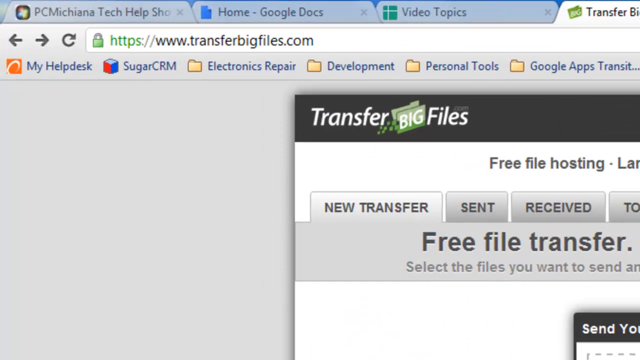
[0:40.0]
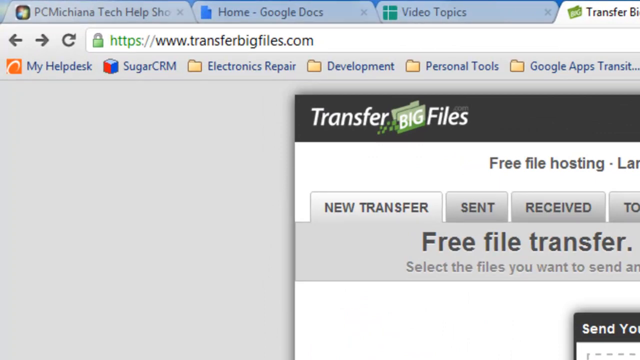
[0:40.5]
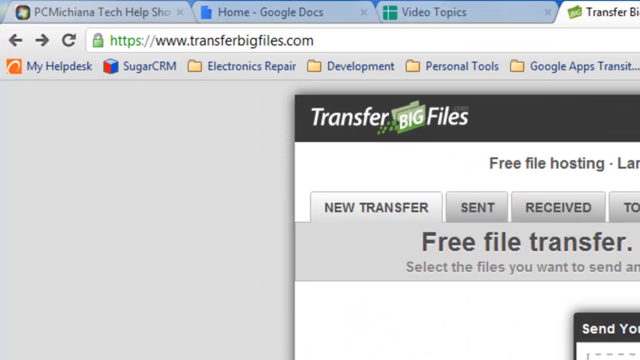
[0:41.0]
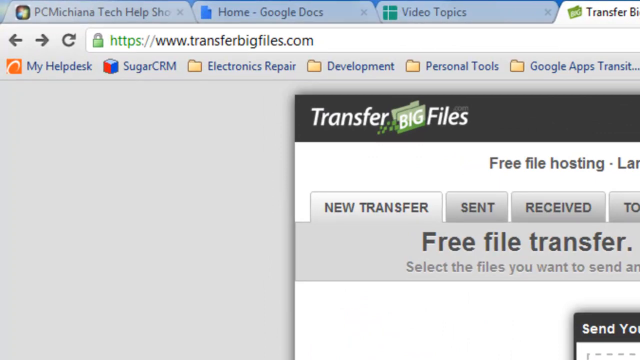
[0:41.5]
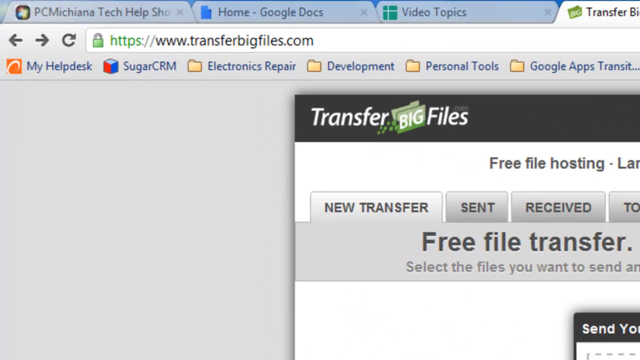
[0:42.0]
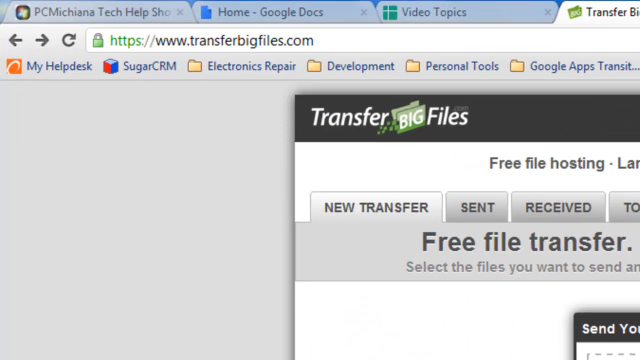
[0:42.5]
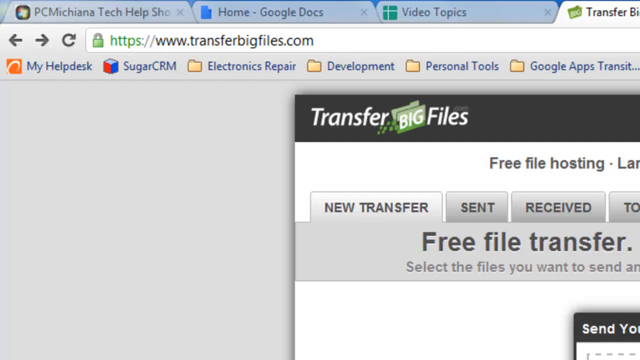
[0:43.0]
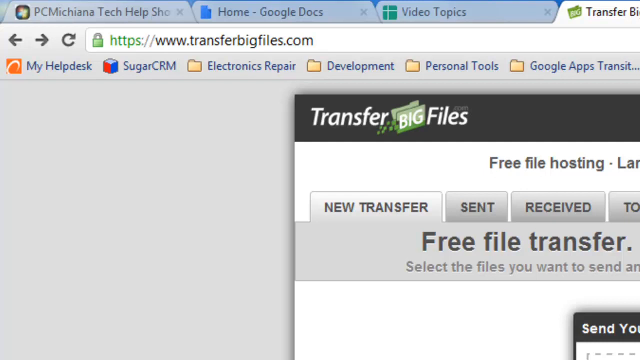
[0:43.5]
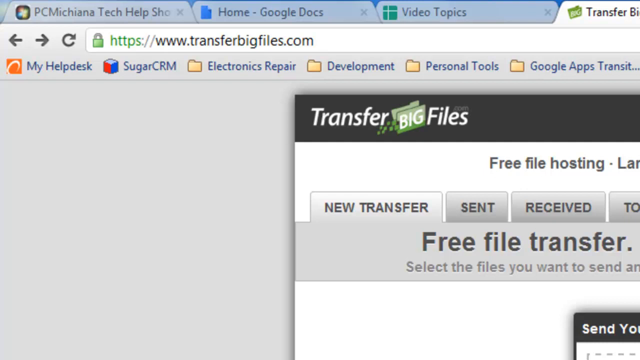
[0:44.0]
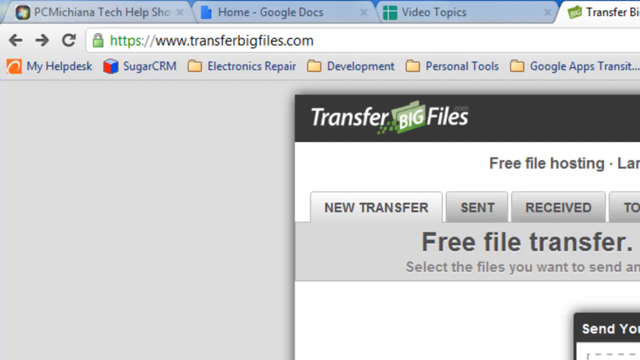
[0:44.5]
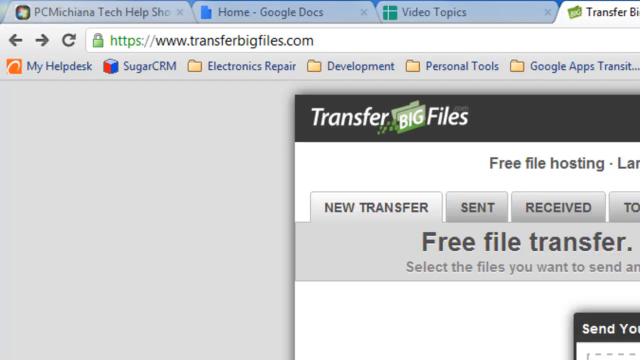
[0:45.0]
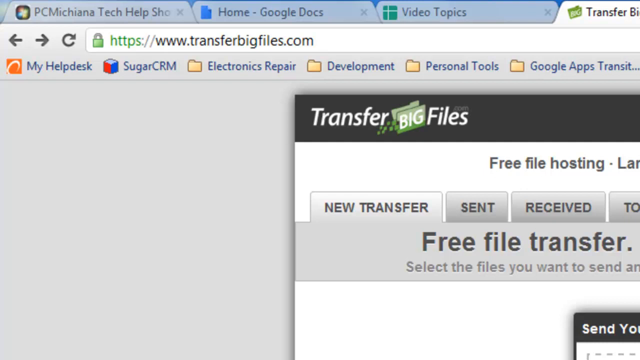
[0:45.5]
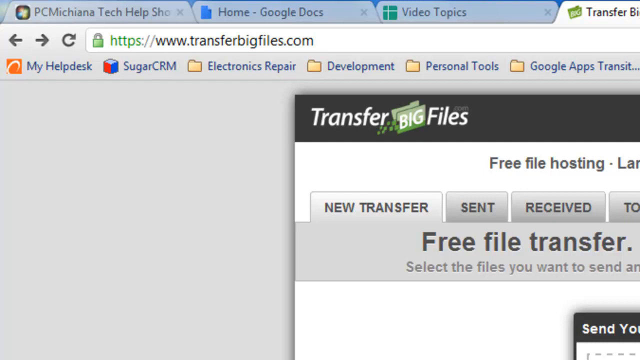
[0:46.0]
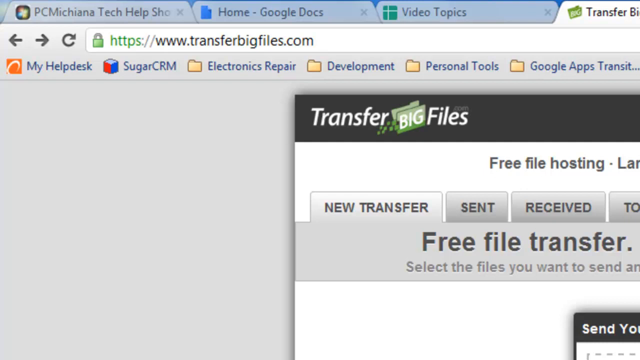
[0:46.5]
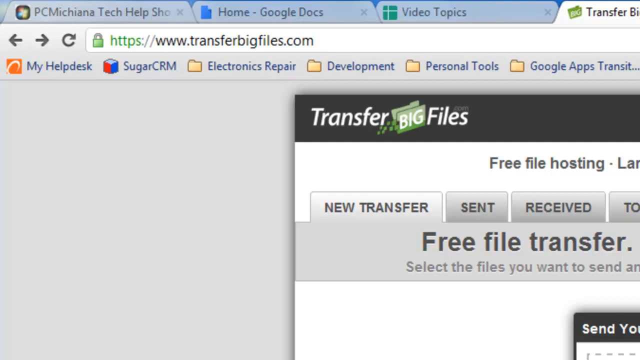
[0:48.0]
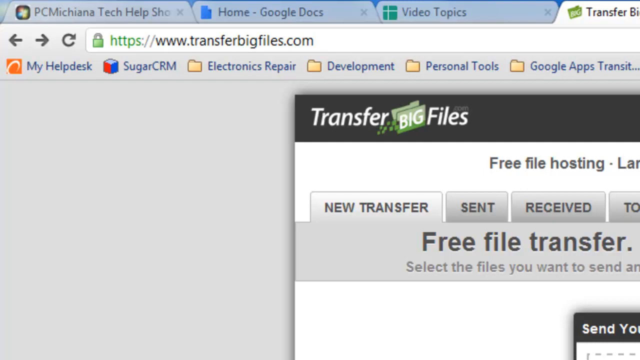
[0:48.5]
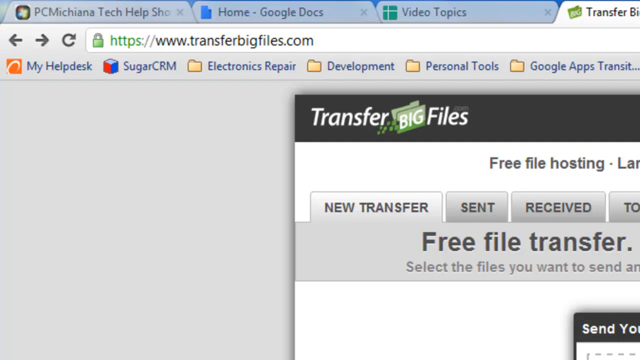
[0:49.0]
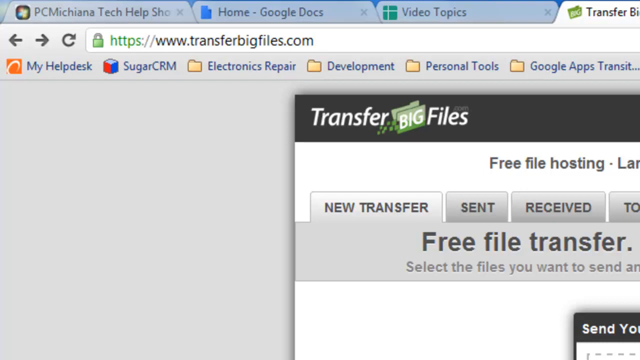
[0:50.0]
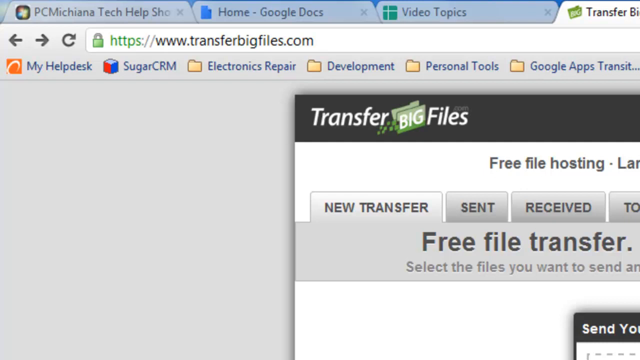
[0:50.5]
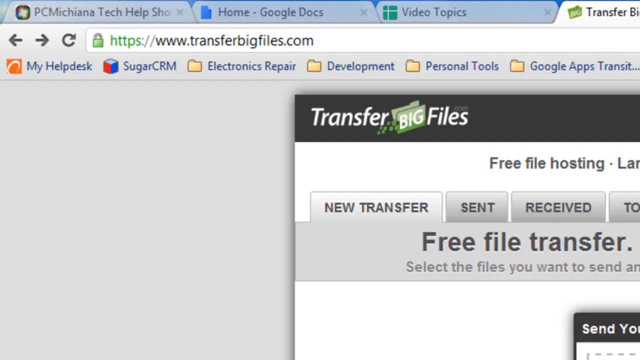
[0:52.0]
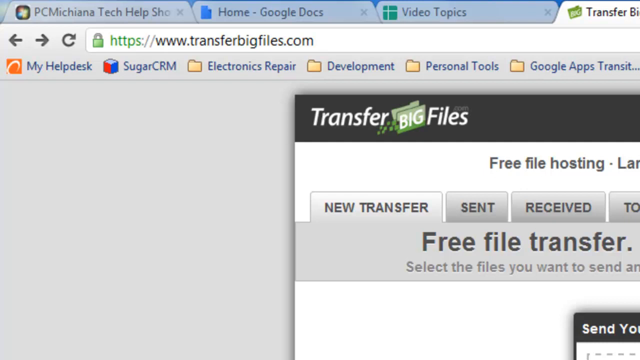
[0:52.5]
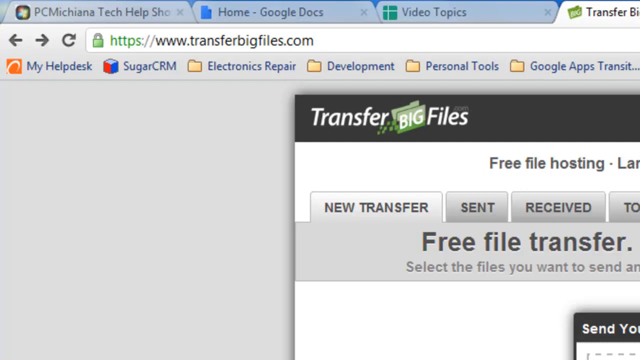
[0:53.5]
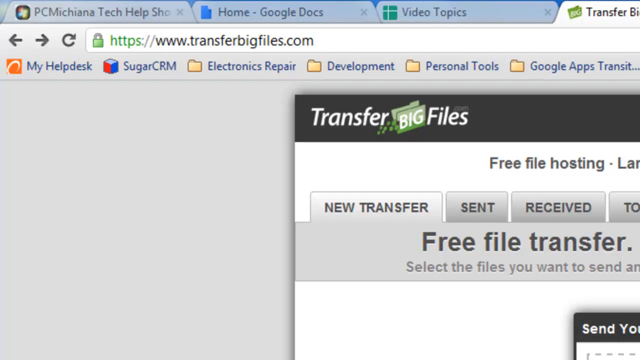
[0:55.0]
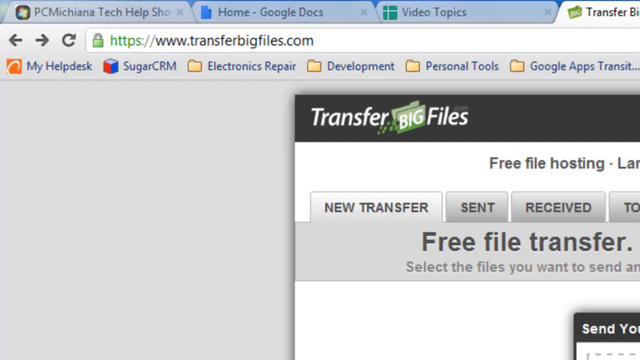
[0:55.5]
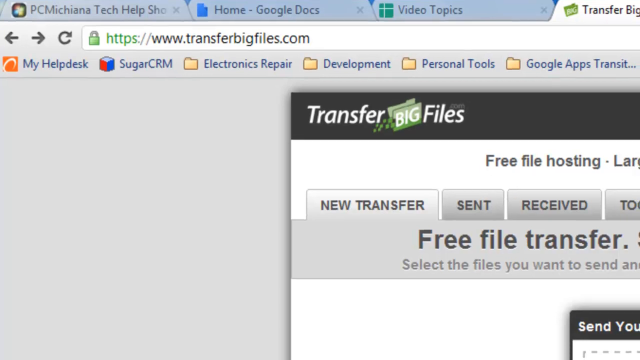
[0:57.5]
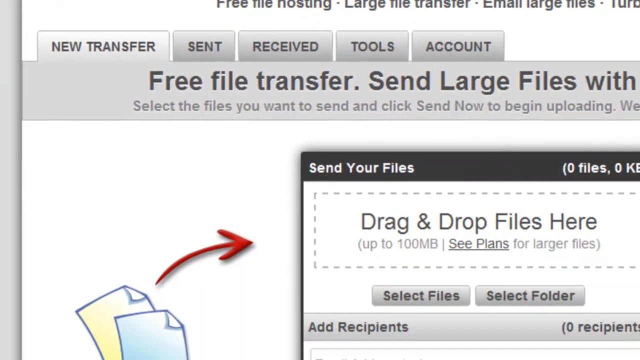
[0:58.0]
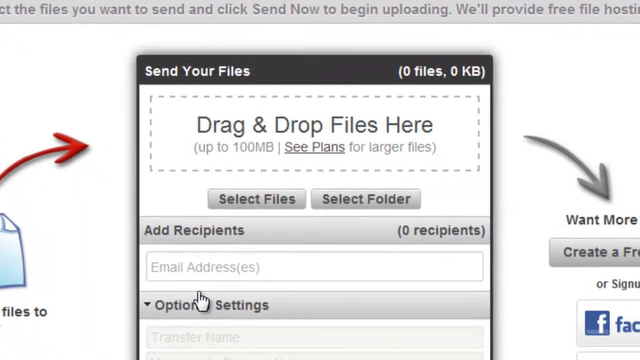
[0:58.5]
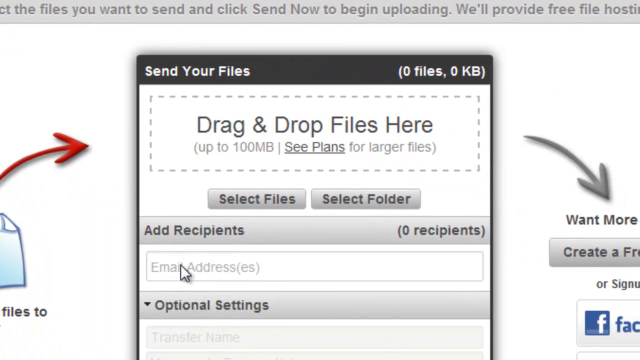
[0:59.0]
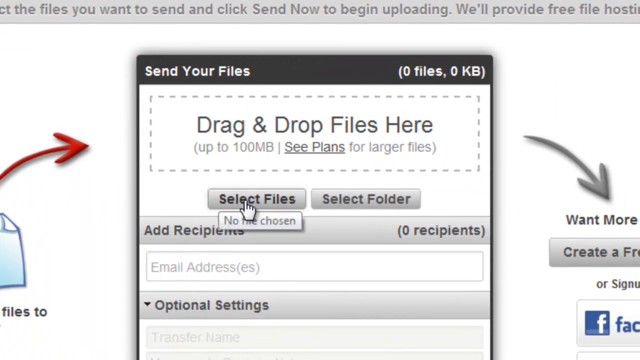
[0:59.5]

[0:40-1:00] "Transfer big Files" appears on a black banner, with "Transfer" and "Files" in white text and "big" in a sloped green rectangle in the centre. Beneath it is black text reading "free file hosting". The view then moves down to the centre of the screen, so the image moves diagonally toward the top left-hand corner. As it sweeps up to the top left, the centre of the screen comes into view: a red arrow points in from the left of the screen toward the centre, where a box with a dotted line says "drag and drop files here". This is surrounded by a black border with a thicker black banner at the top. On the right-hand side, a black arrow sweeps downward toward the words "want more". Beneath the dotted box are two boxes reading "select files" and "select folder", and beneath those is "add recipients", with "(zero recipients)" in brackets to its right. The cursor clicks the centre of "select files", turning into a hand icon as it does so.